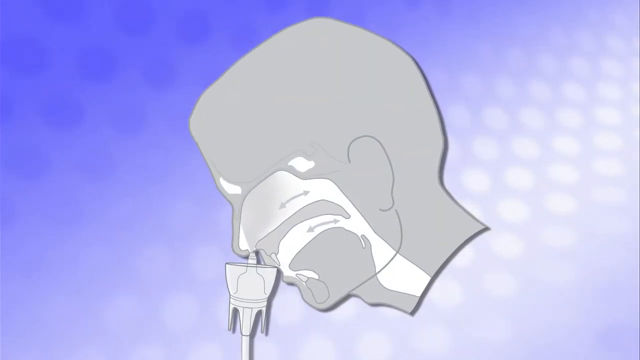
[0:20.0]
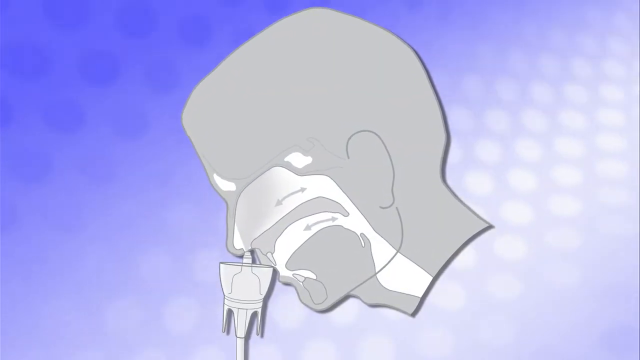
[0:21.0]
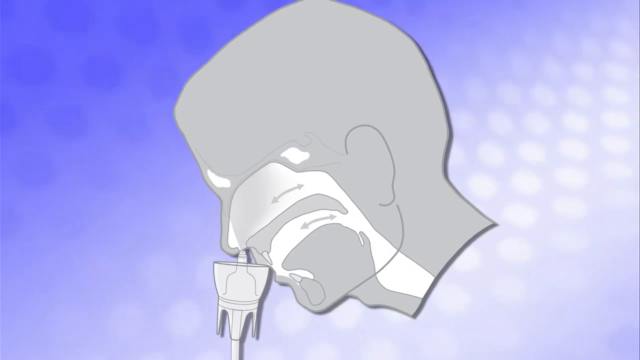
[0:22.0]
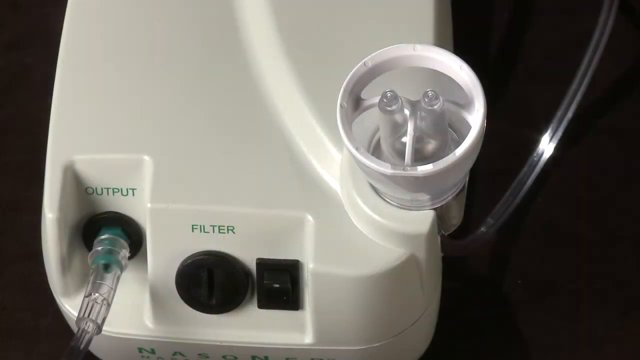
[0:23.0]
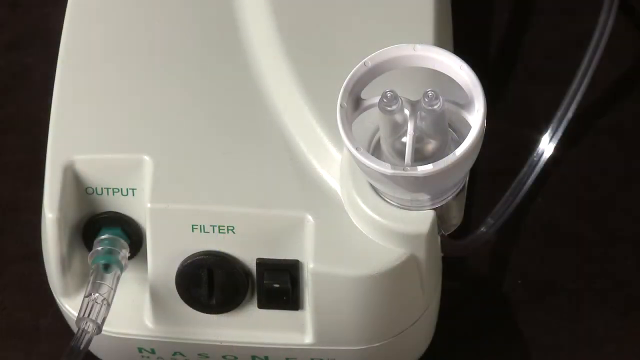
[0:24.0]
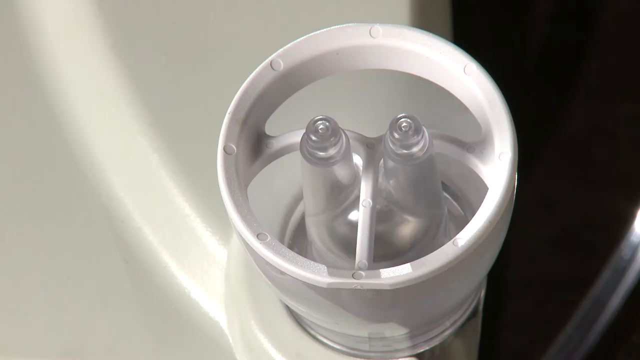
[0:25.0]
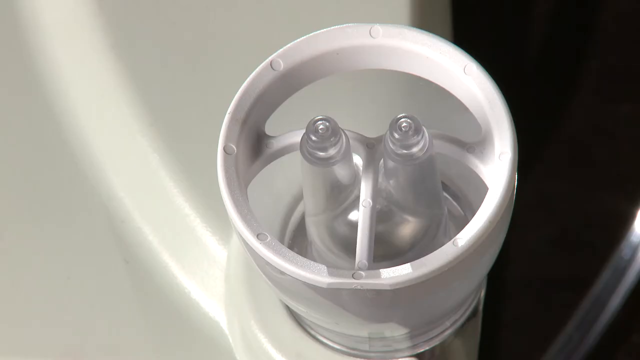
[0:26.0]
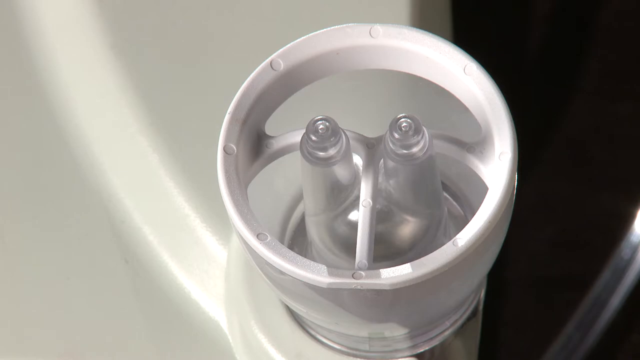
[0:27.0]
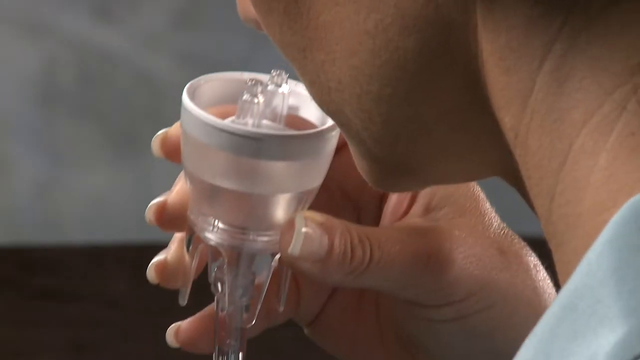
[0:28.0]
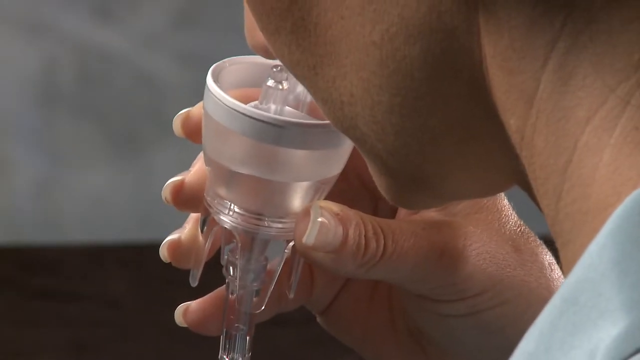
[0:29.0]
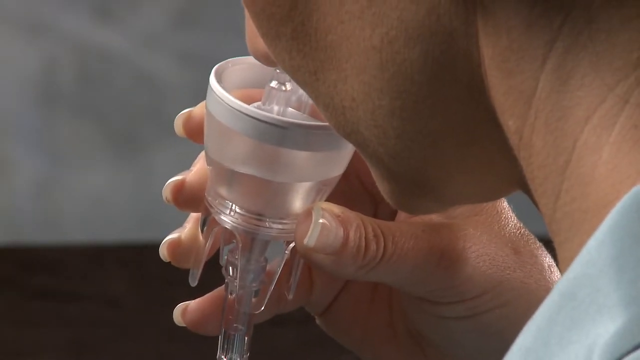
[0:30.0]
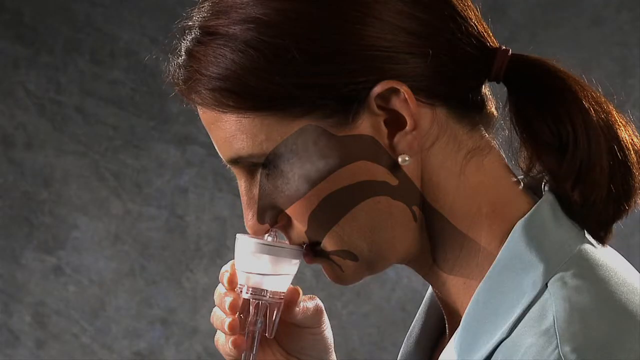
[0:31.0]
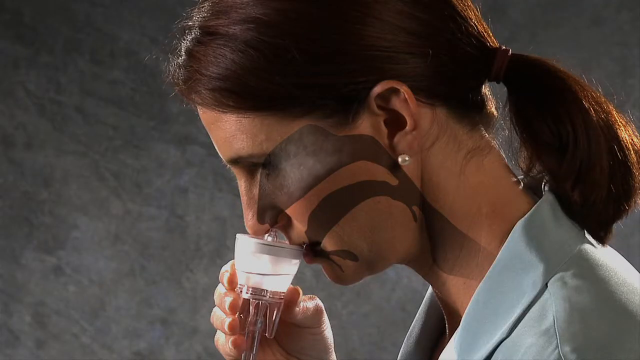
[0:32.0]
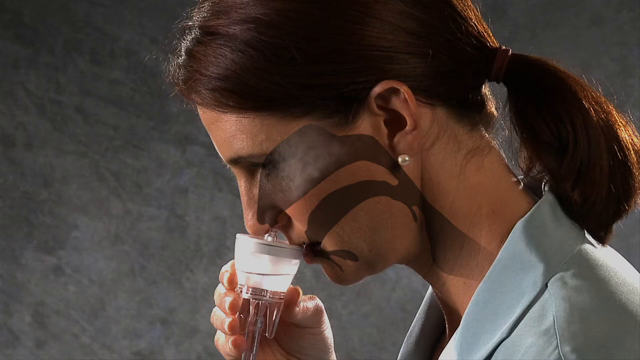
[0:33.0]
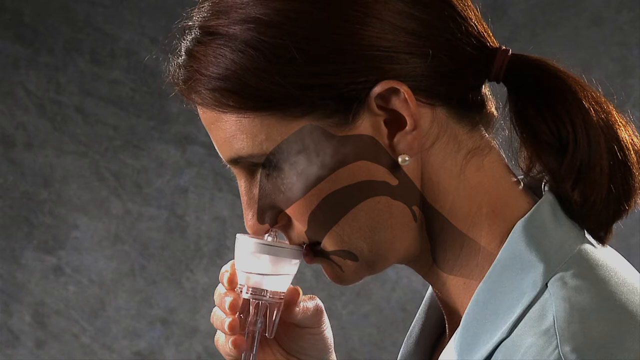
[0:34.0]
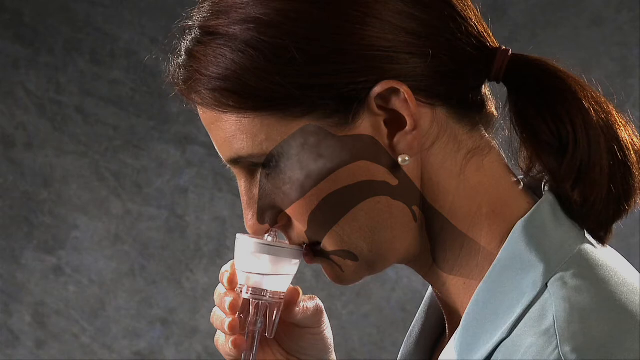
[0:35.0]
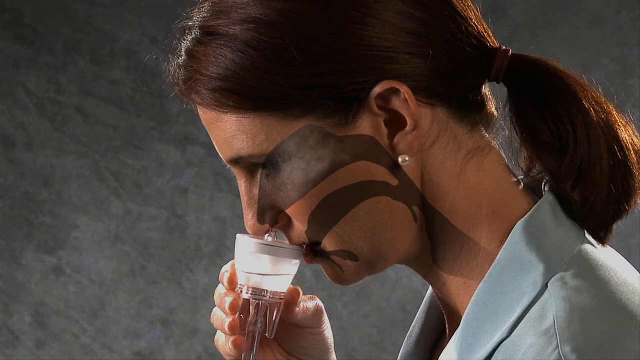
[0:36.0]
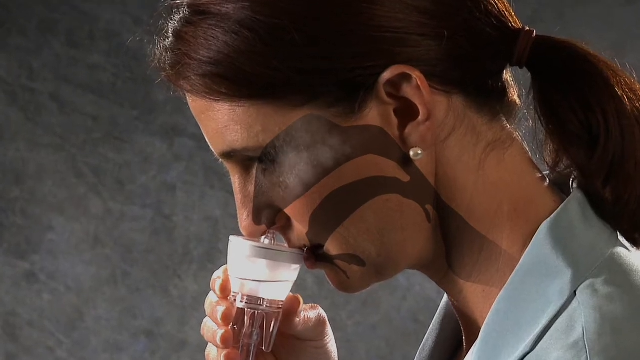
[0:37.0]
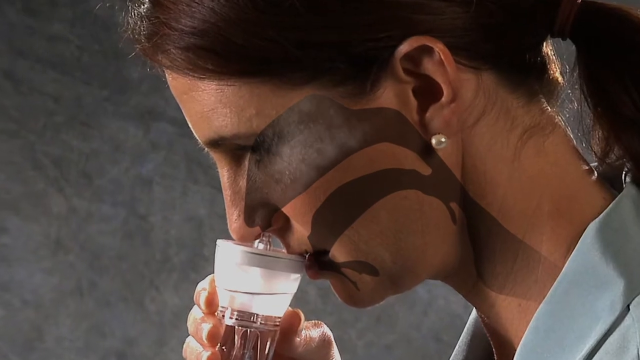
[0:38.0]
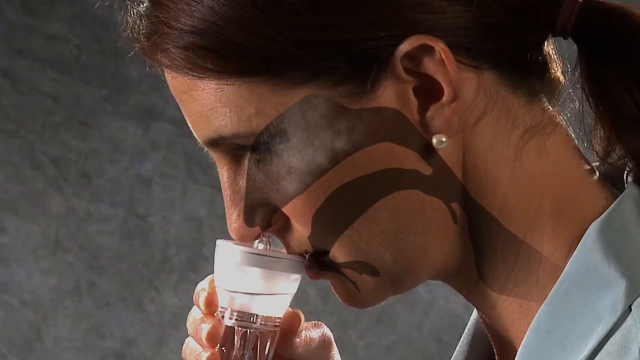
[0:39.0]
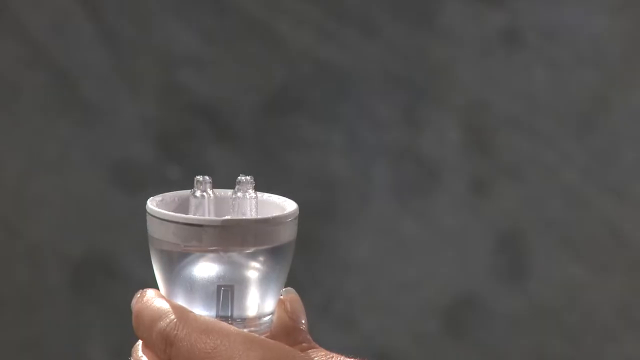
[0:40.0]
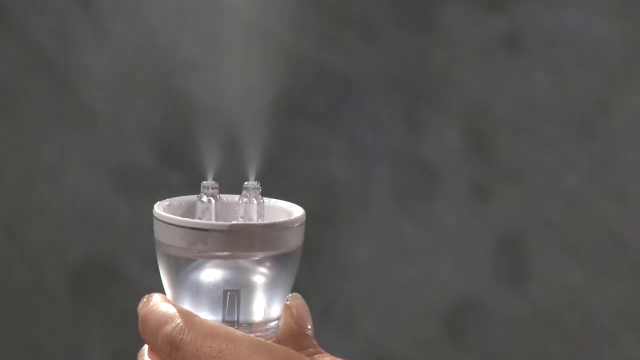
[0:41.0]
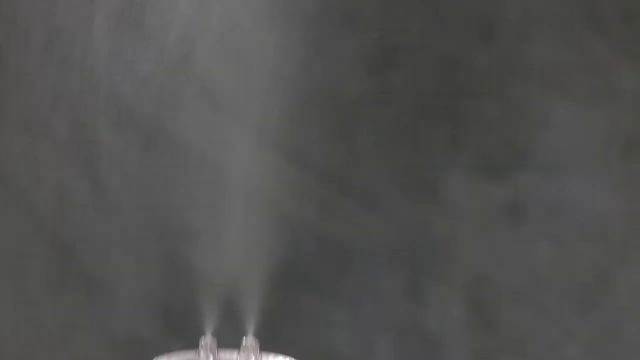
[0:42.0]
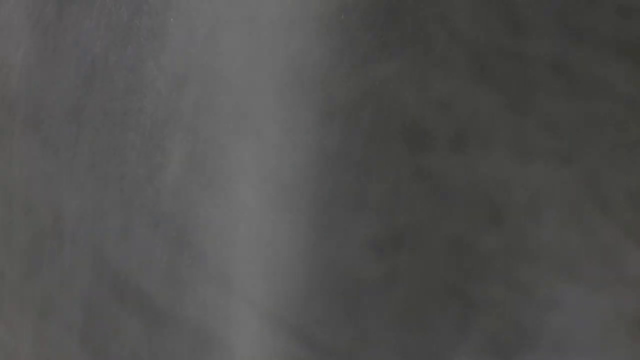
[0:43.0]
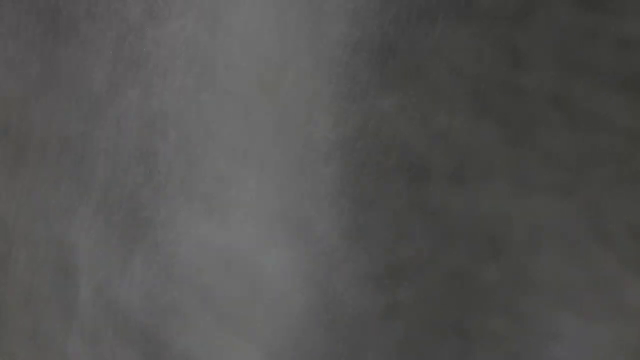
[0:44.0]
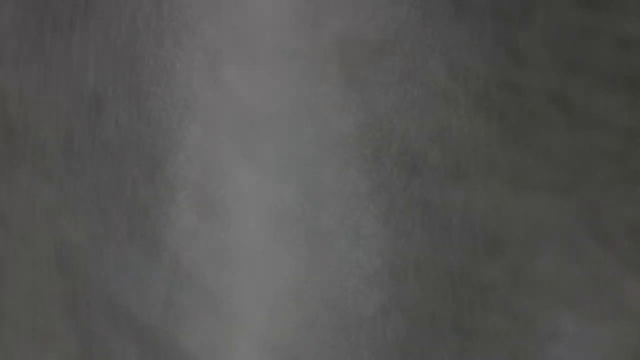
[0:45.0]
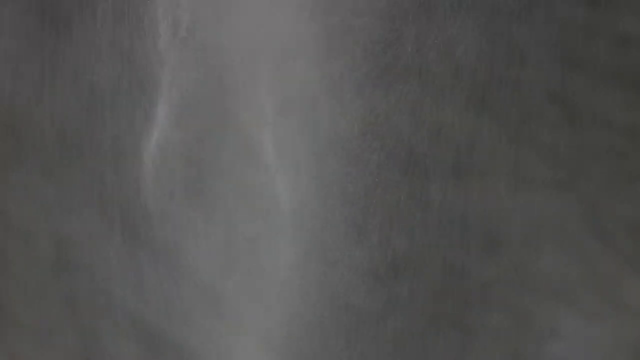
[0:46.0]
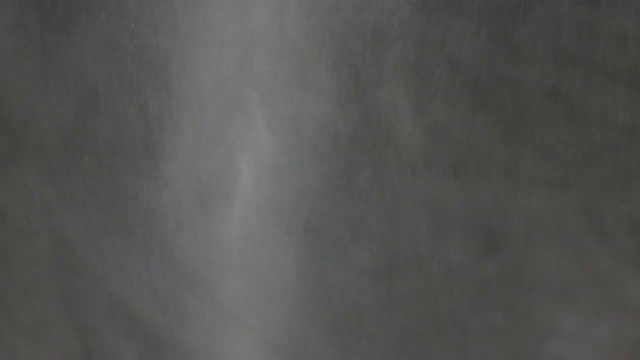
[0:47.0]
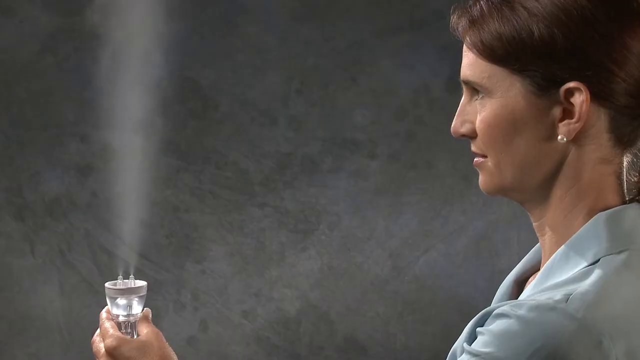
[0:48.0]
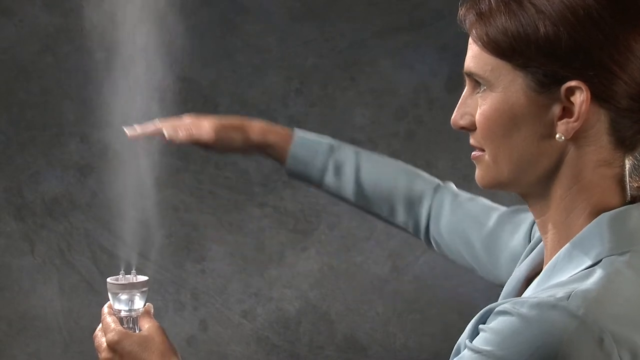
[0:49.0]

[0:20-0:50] An animation shows the device being used. It depicts a person's head facing the left side, slightly tilted down, showing the passages from the mouth and nose and the airway in the neck. The nasal device is placed on the nose, and arrows show the air direction through the windpipe, in and out. A closer view shows the nasal nebulizer and the pieces connected to it. A person in a white t-shirt, whose face is covered, holds the nose piece of the nebulizer in their right hand and brings it closer to the nose. A woman holds the nebulizer piece close to her nose, and the air coming out of the nebulizer is shown traveling through the nasal passage down to the throat. She faces the left side of the frame, has brown hair tucked behind her back, and wears a white lab coat. A closer view of the nasal nebulizer shows that the front end piece has two knobs that fit into the nostrils.